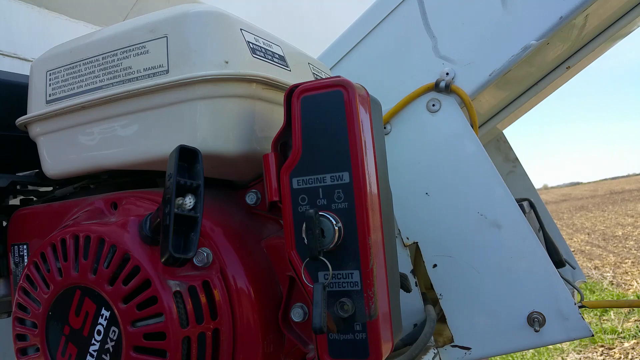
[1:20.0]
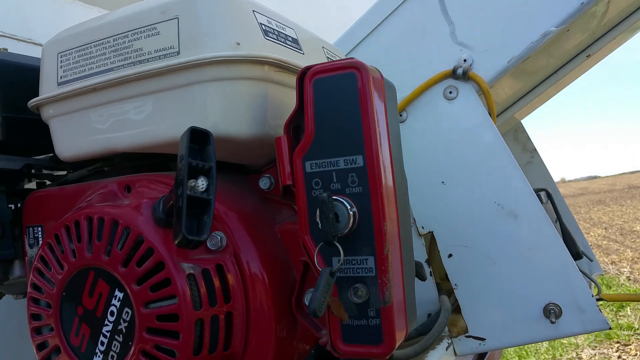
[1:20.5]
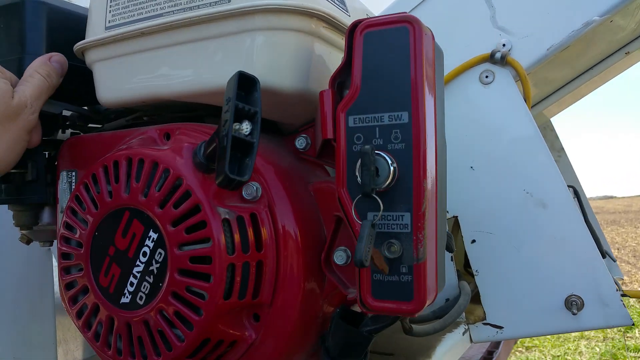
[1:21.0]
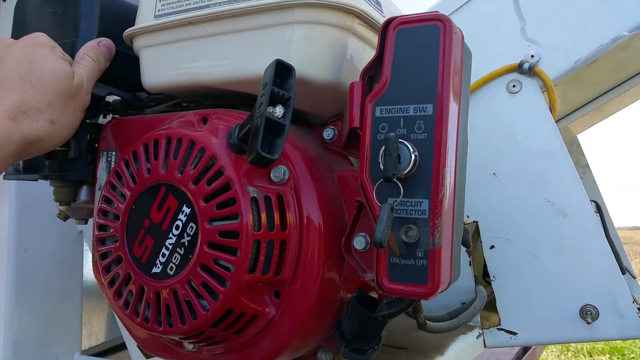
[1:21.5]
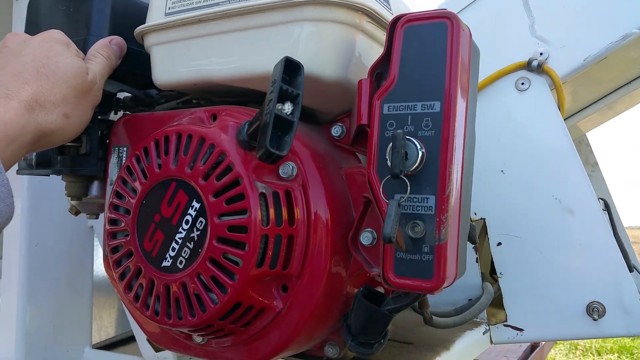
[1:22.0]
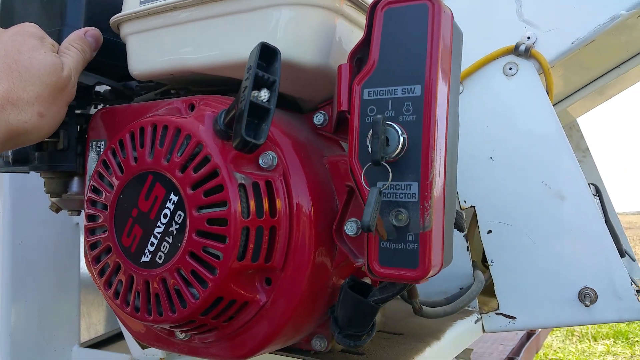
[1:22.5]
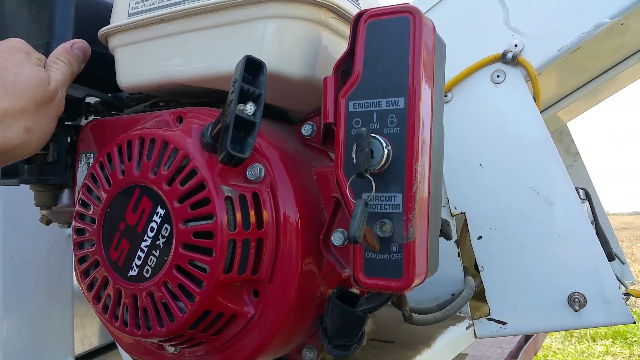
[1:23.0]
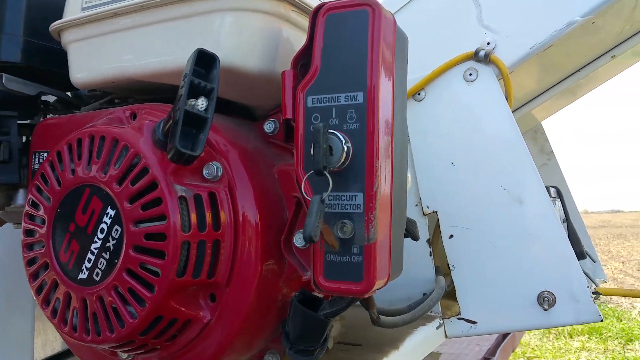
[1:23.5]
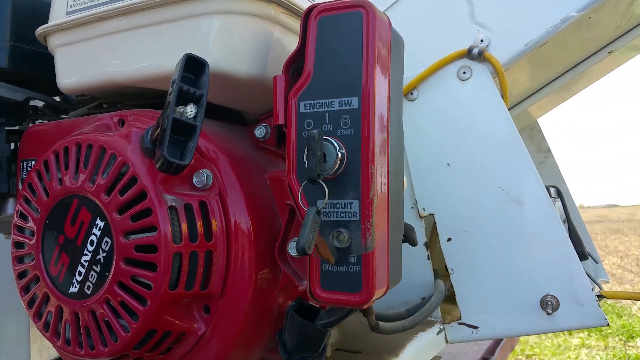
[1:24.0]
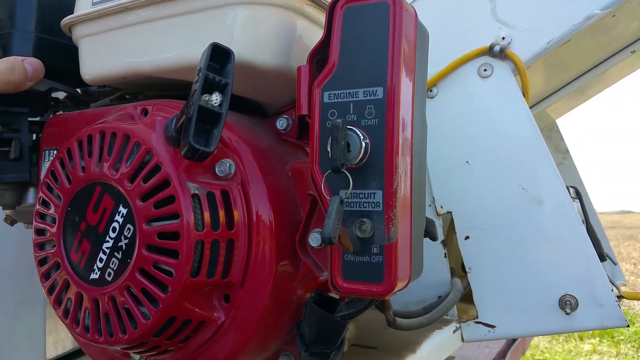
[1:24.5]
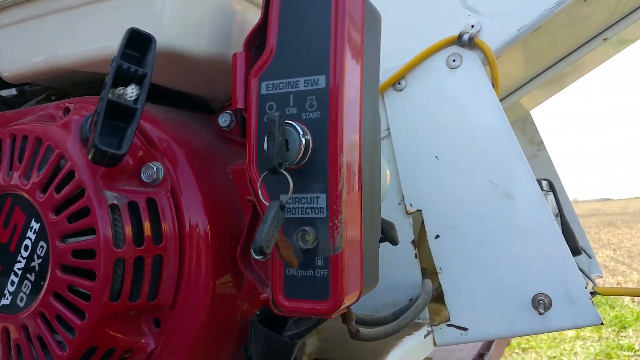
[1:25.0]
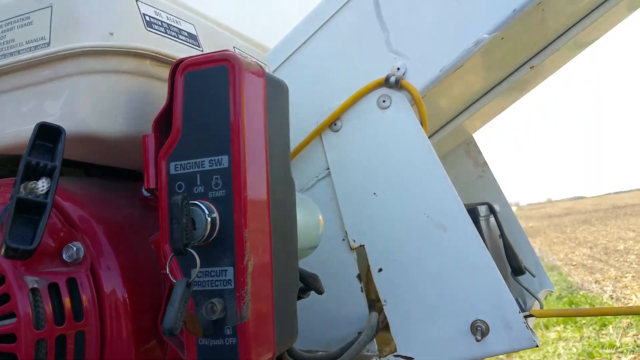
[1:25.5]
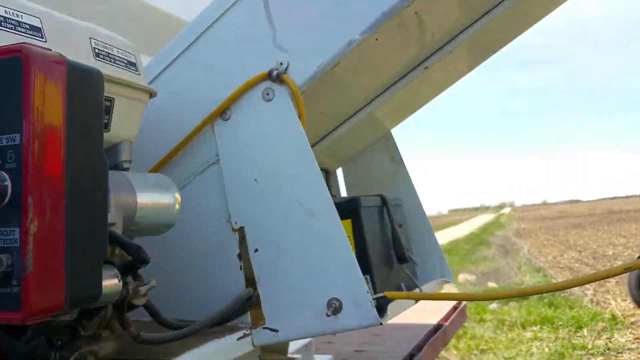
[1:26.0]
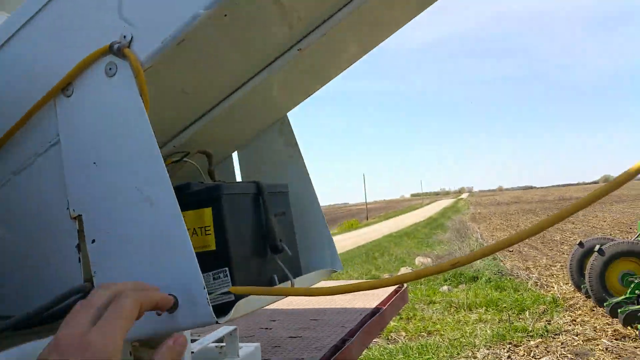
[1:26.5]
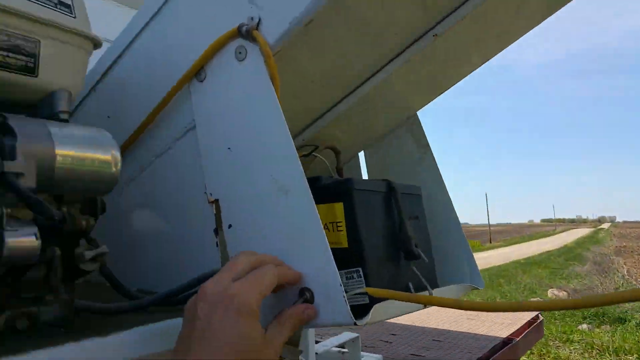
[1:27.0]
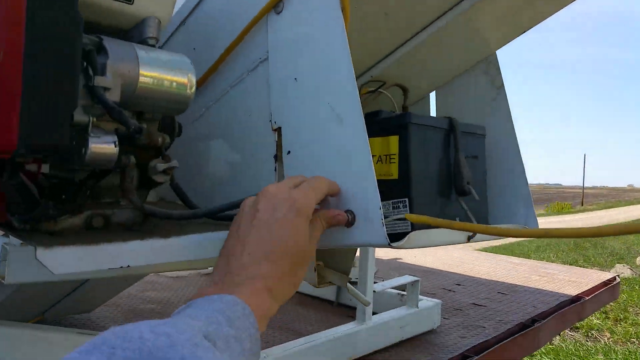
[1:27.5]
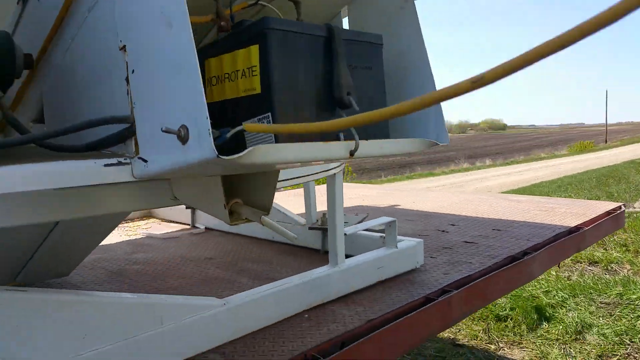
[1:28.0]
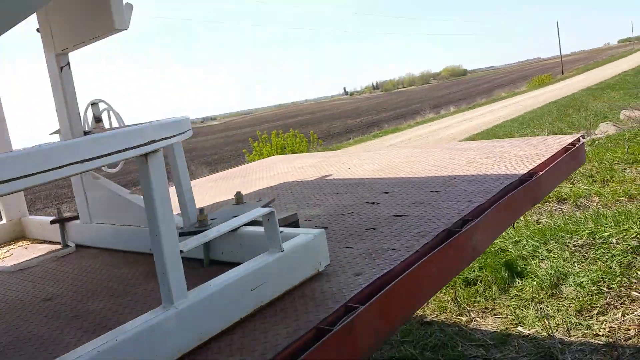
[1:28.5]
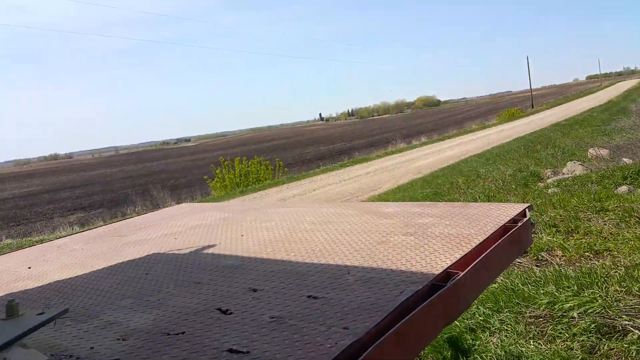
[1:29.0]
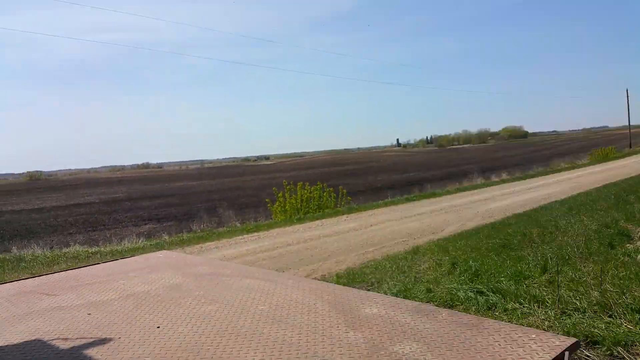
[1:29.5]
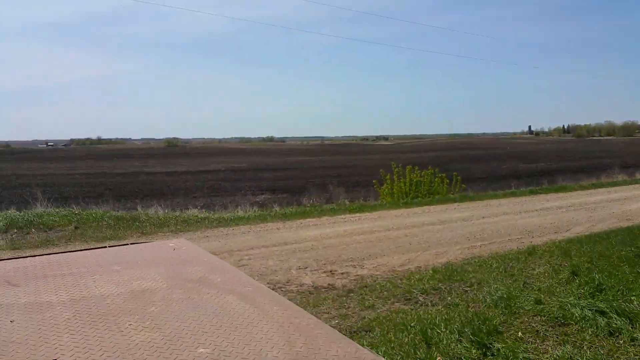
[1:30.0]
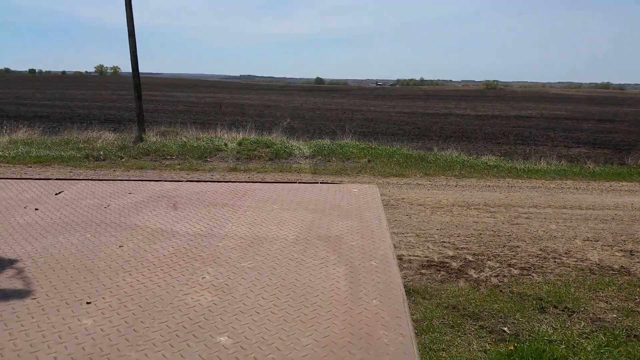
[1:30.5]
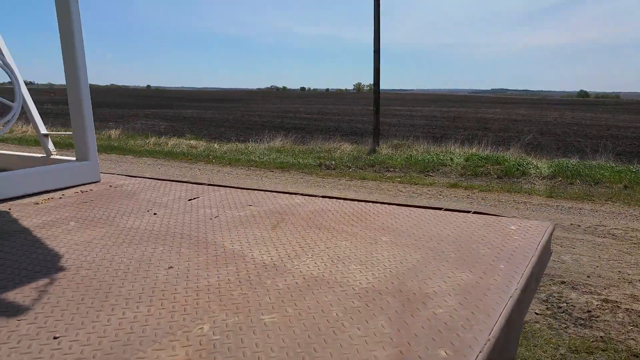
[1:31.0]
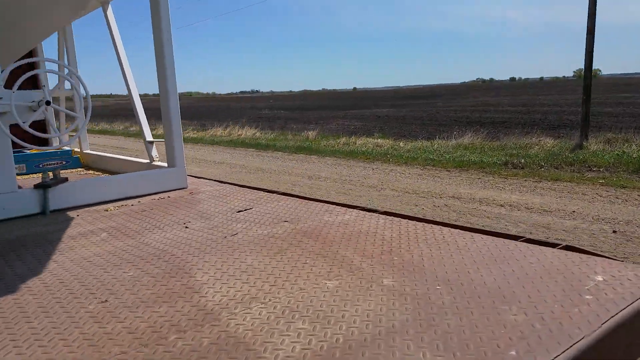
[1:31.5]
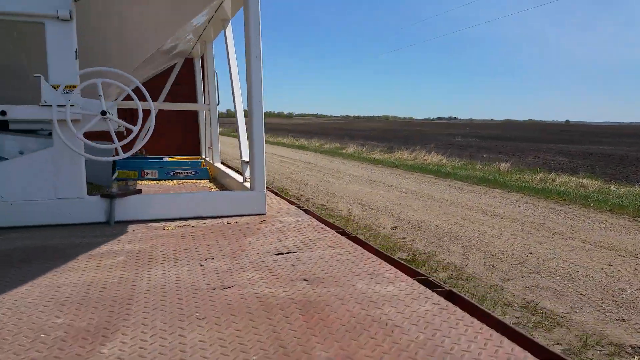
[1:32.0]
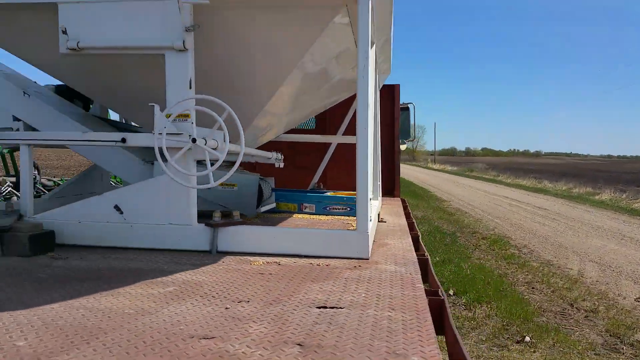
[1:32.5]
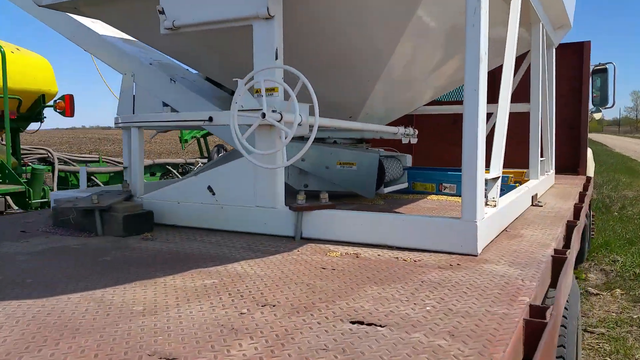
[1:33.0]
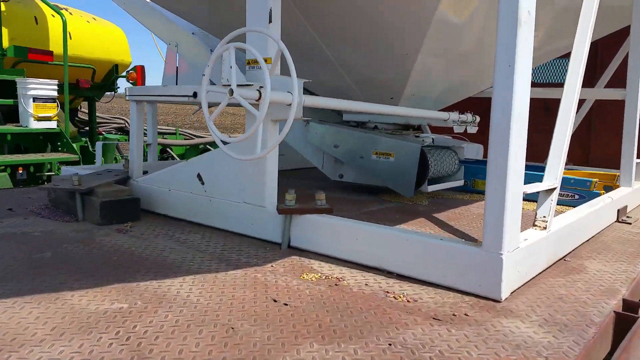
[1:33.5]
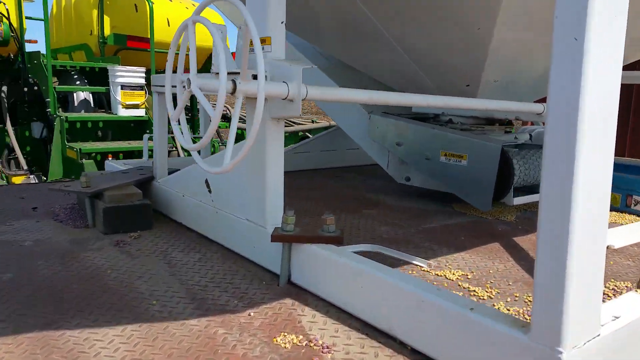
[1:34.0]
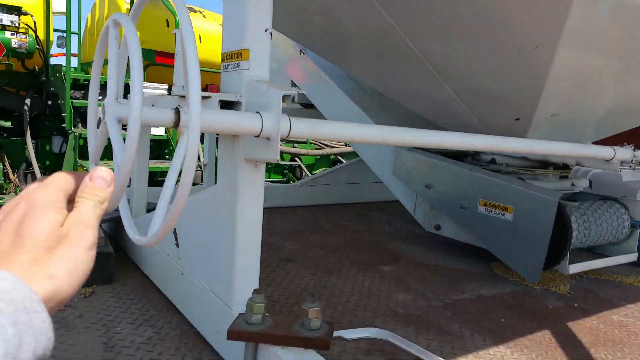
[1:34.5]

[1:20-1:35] The red motor vibrates, and the man reaches out to the side of the motor with his left hand. A key is in the ignition next to the red motor. The man steps away, reaches for a part of the chute, and turns on a small switch on the white chute. He then walks around the rusty platform supporting the white container connected to the truck. On the other side of the platform, he reaches for a white valve with his left hand. He is now closer to the road on the green grass rather than in the open field where he was at the beginning of the video.